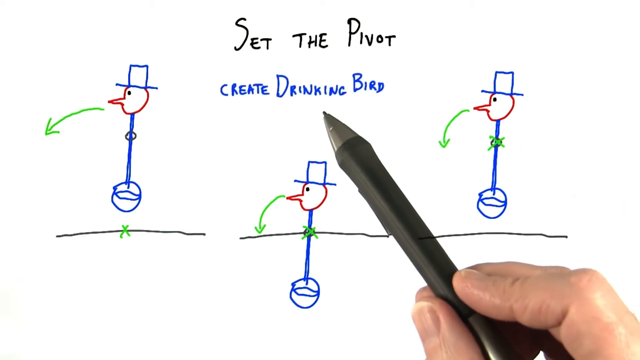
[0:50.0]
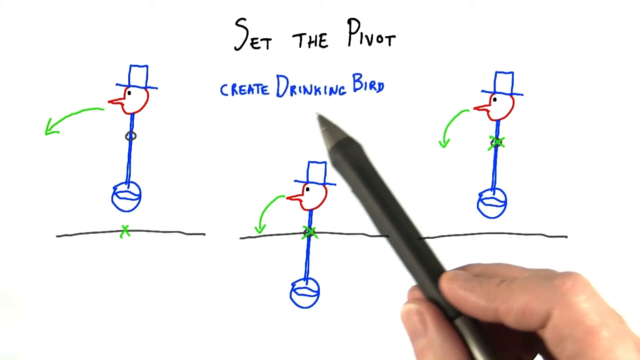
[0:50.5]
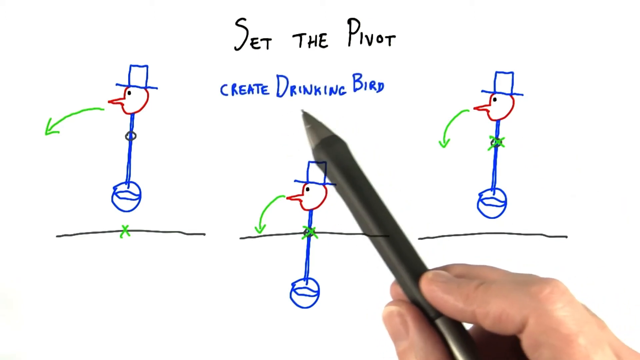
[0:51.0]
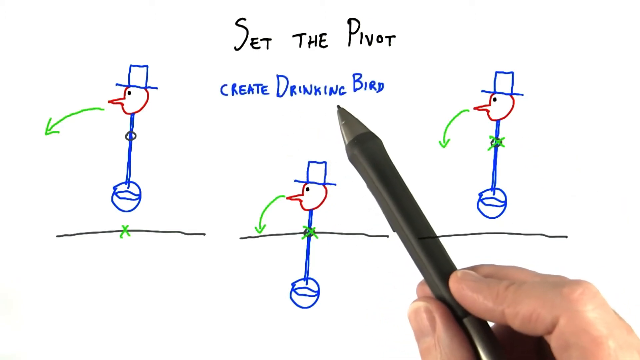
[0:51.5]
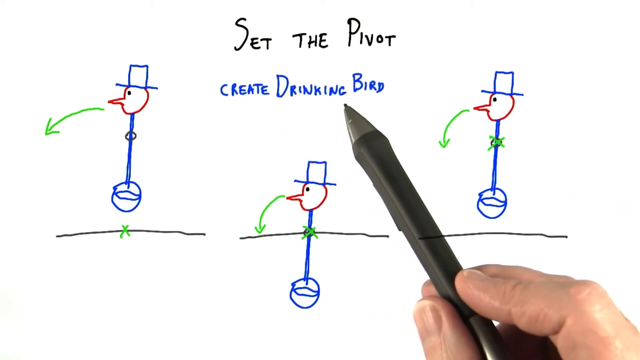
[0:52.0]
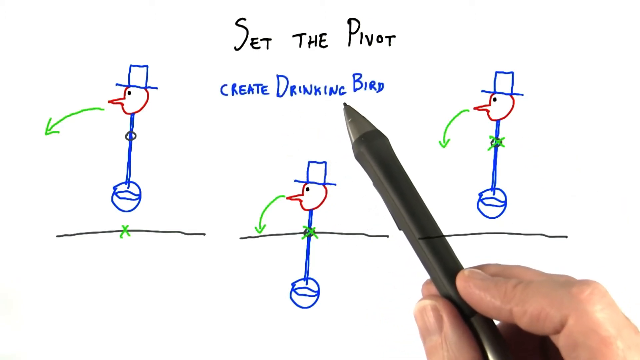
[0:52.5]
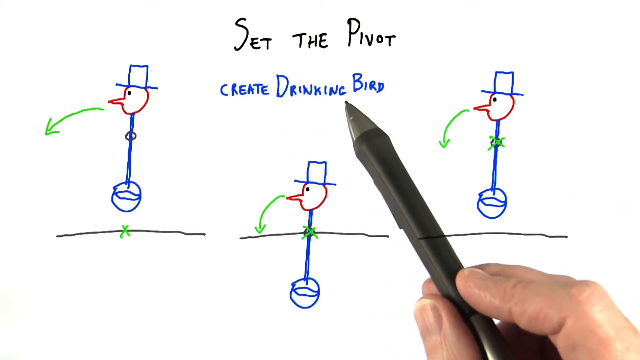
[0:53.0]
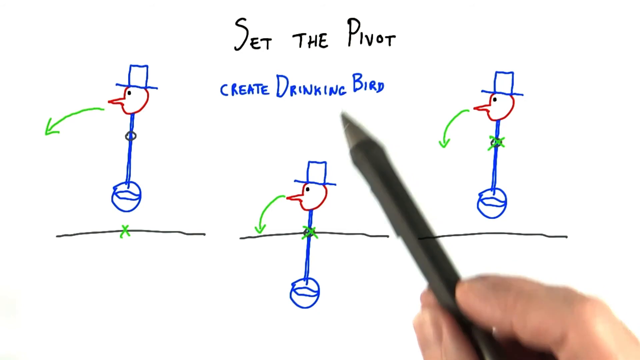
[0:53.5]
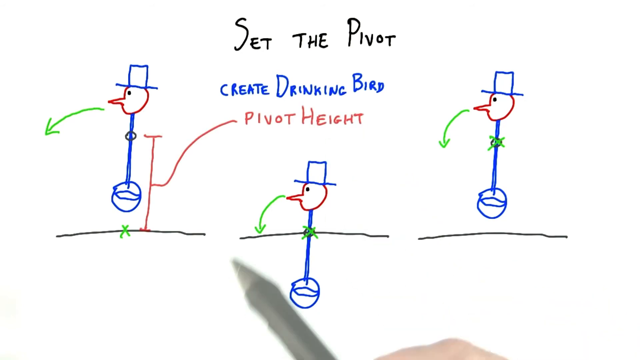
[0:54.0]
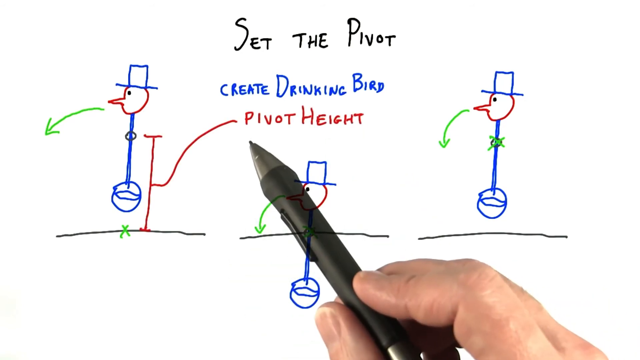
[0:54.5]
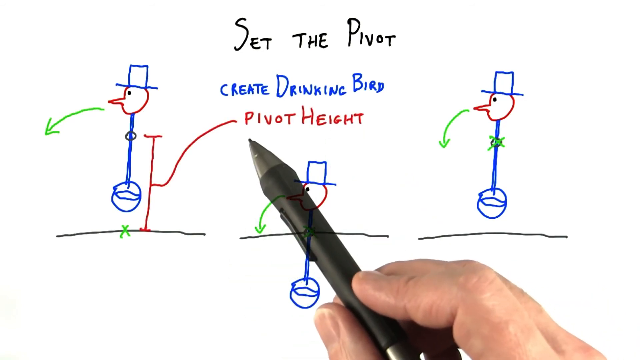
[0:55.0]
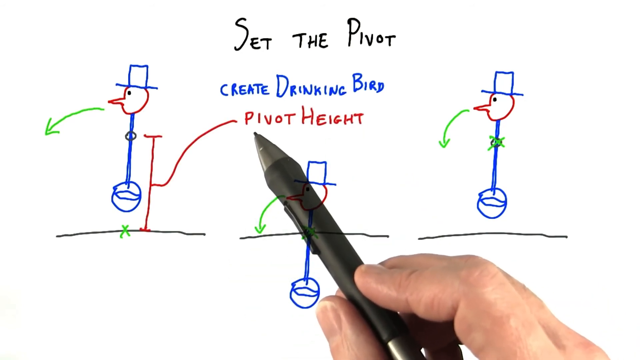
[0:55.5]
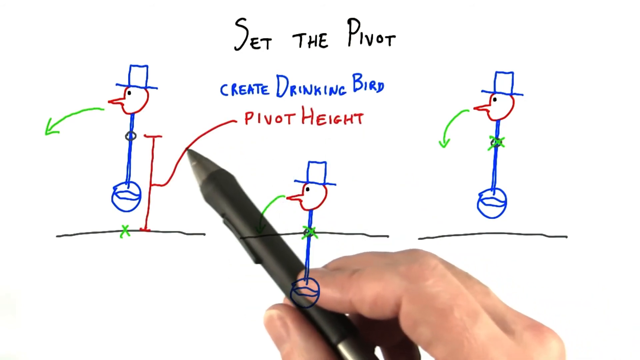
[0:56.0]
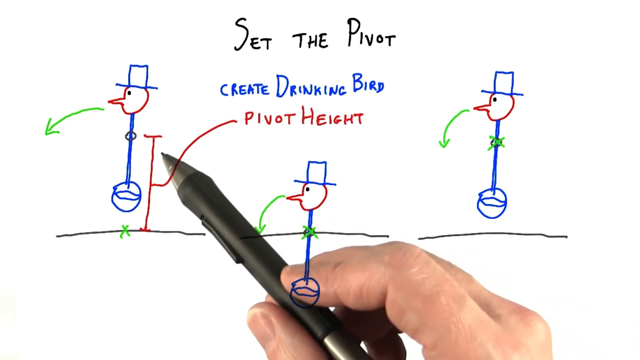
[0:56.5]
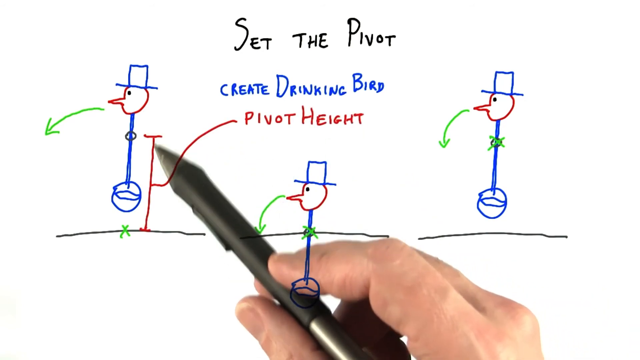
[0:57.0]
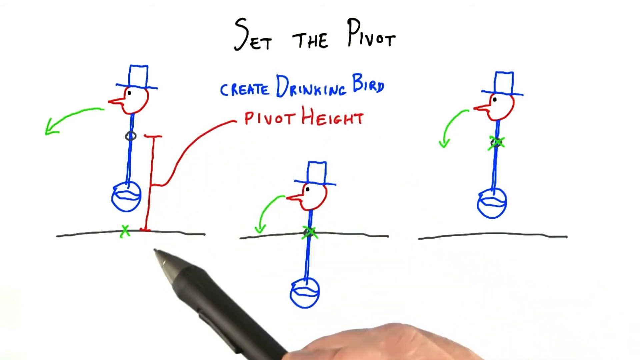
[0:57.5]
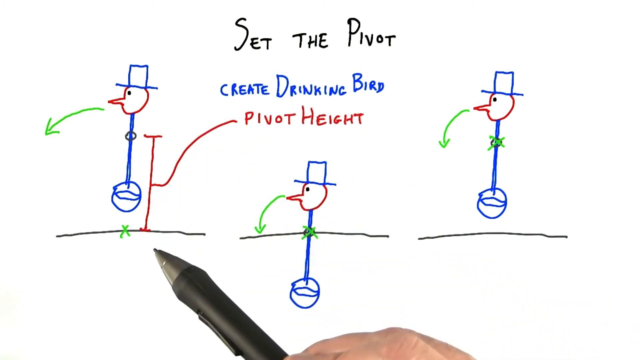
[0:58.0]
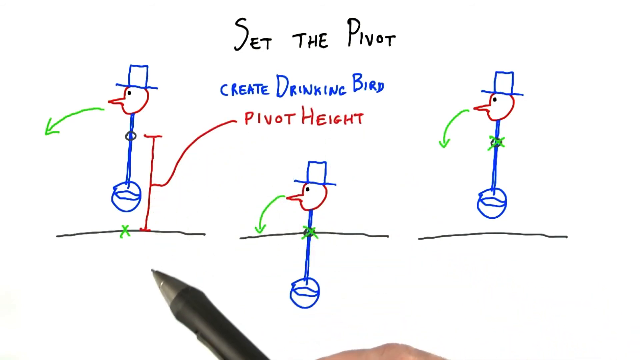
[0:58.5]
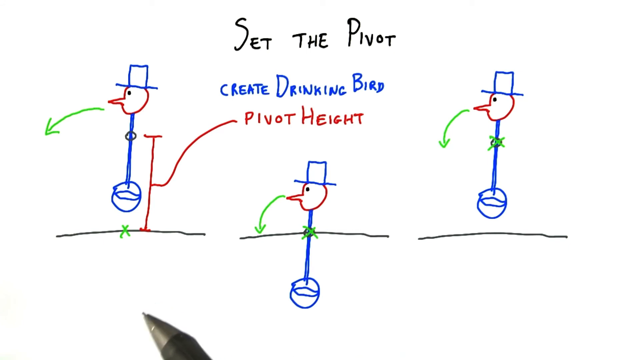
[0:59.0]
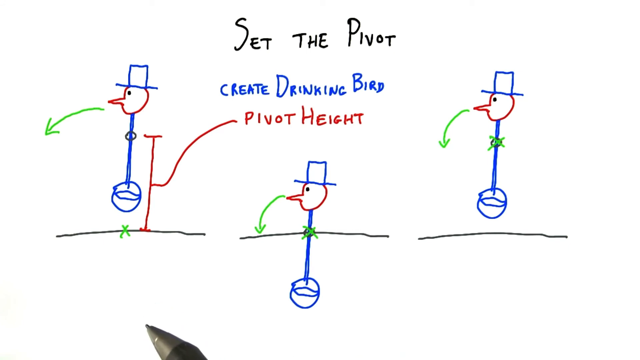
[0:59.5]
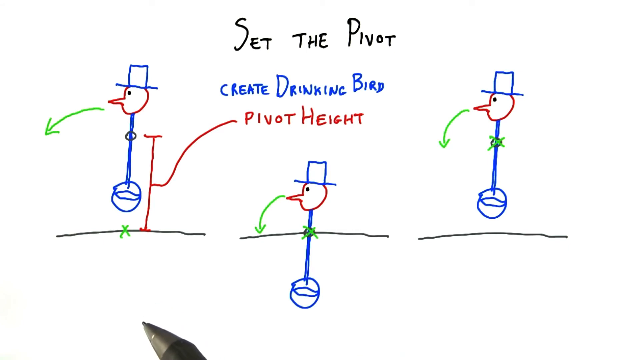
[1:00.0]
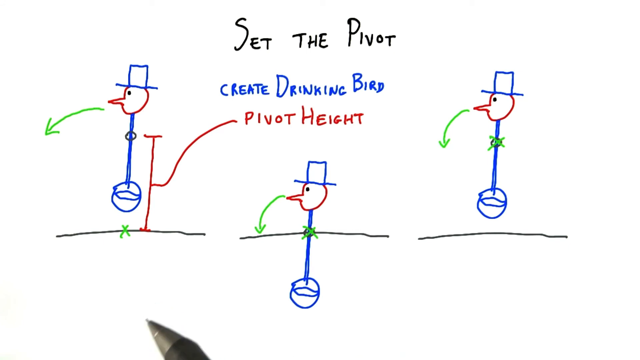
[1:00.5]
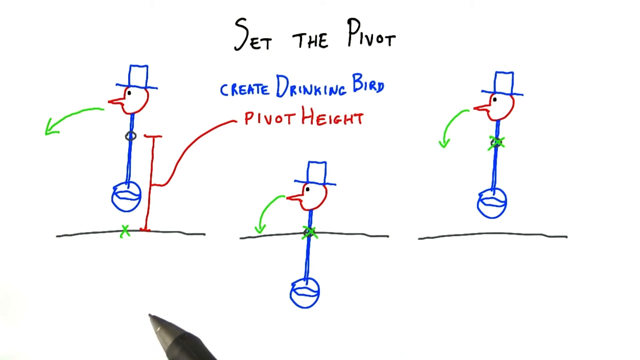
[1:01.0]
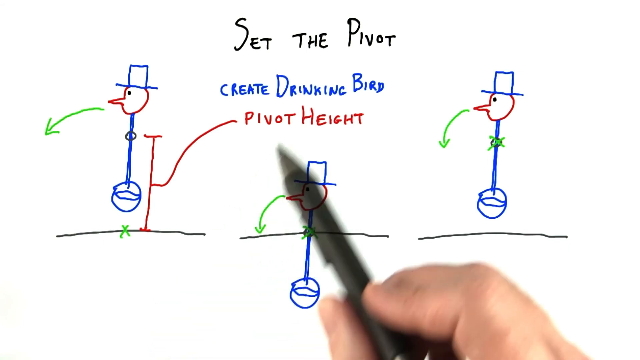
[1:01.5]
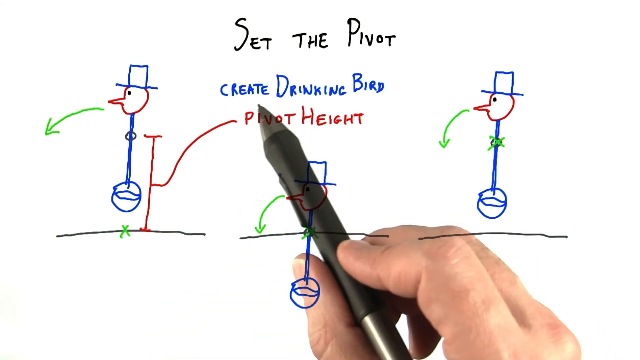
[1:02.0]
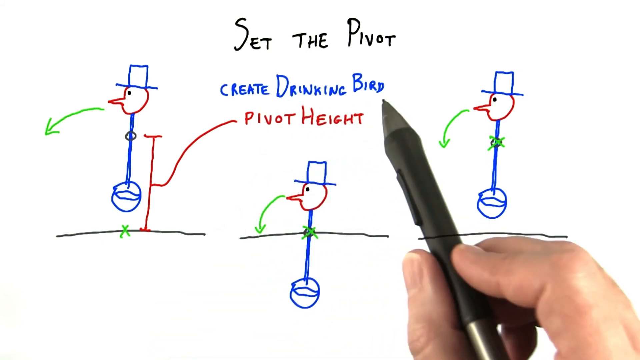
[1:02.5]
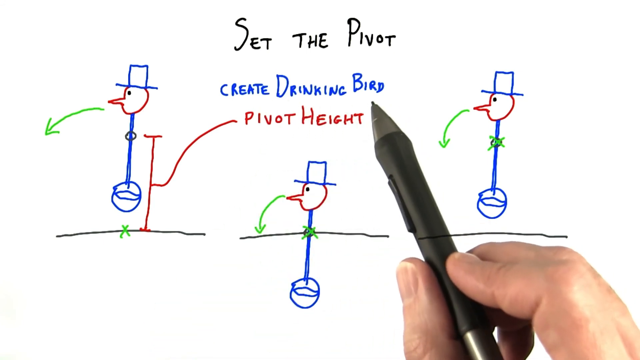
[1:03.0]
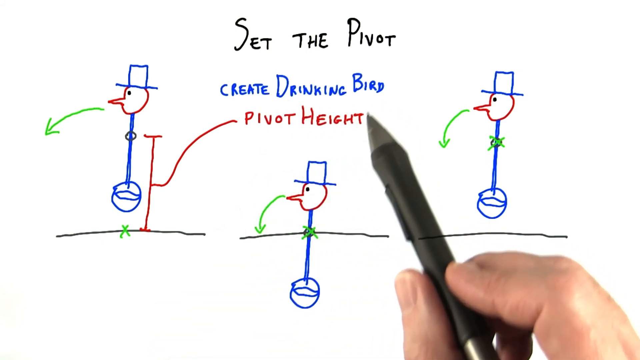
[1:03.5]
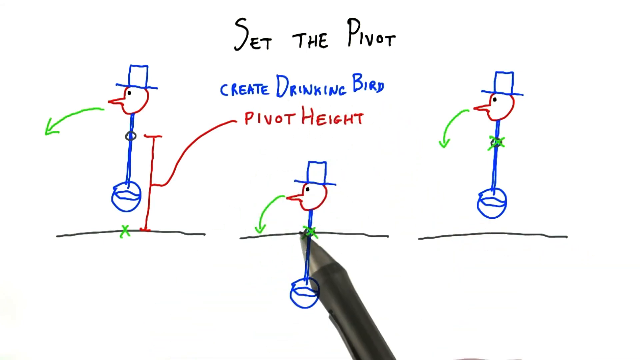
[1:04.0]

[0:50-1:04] The user points at all three stickmen as he gives the tutorial. He writes "create drinking bed" above the middle stickman. He then draws a red line next to the first stickman on the far left and writes "pivot height". The video ends with "set the pivot", "create drinking bed" and "pivot height" written on the screen.